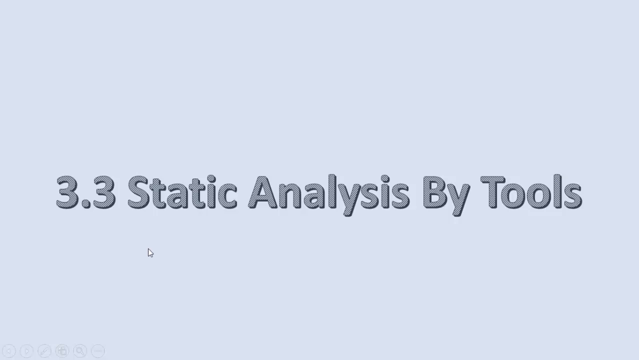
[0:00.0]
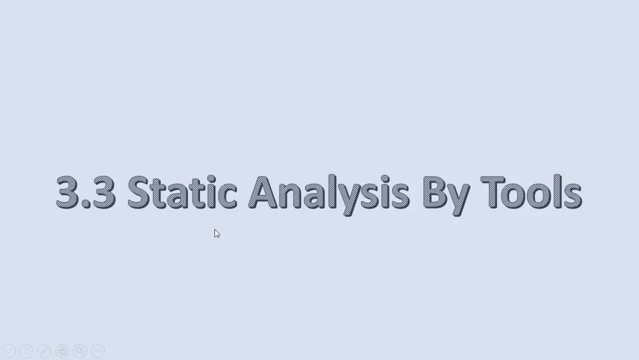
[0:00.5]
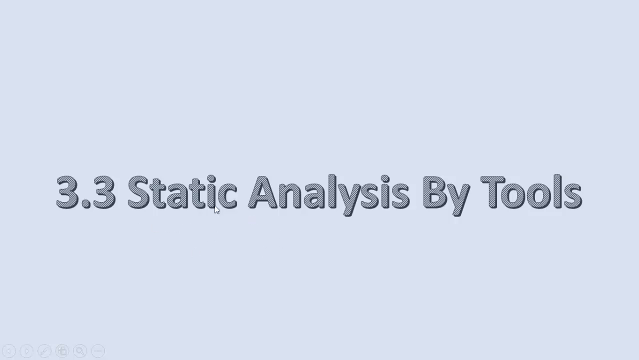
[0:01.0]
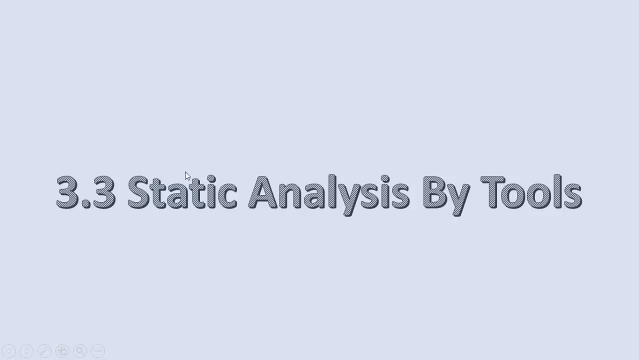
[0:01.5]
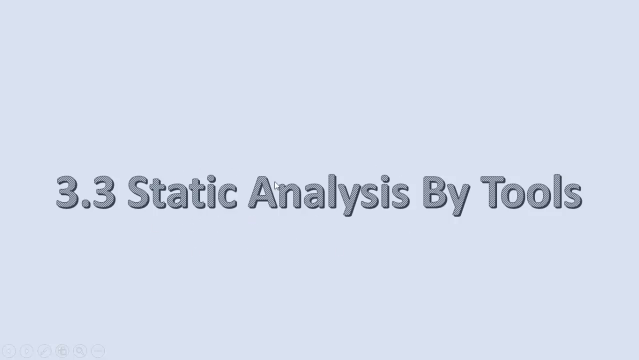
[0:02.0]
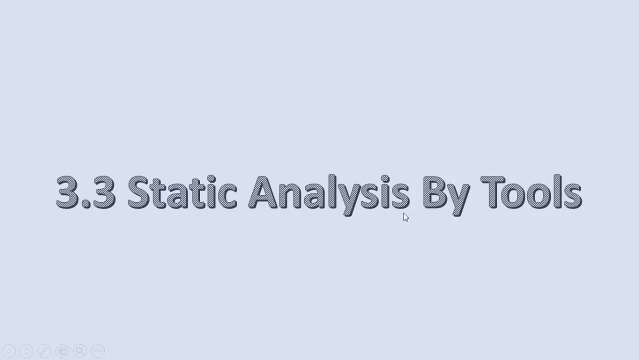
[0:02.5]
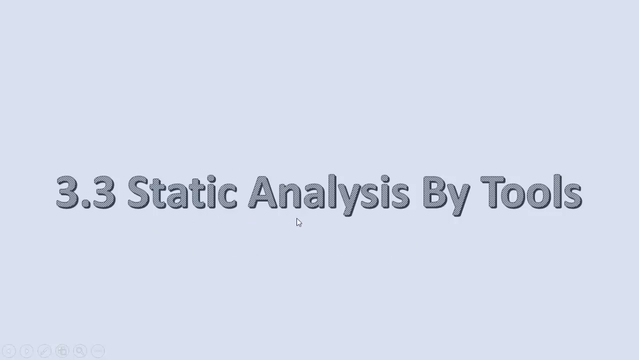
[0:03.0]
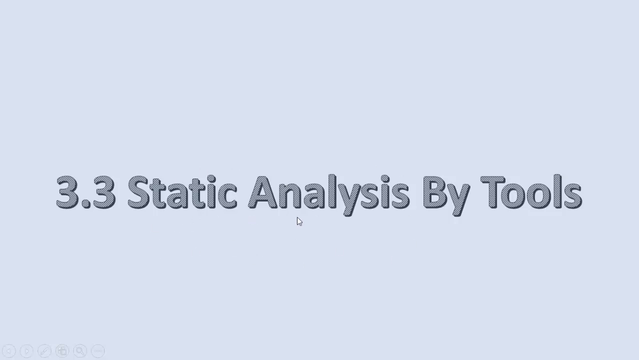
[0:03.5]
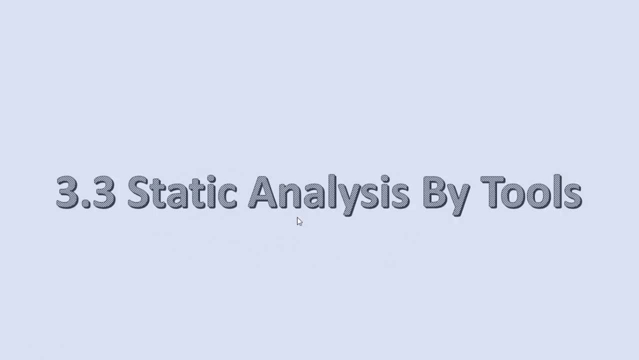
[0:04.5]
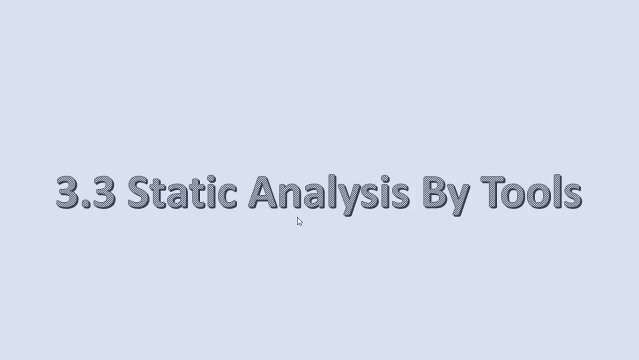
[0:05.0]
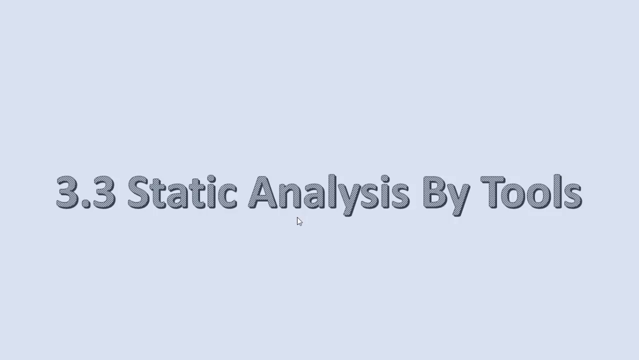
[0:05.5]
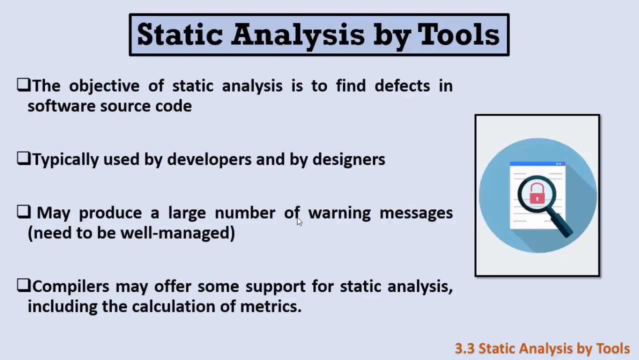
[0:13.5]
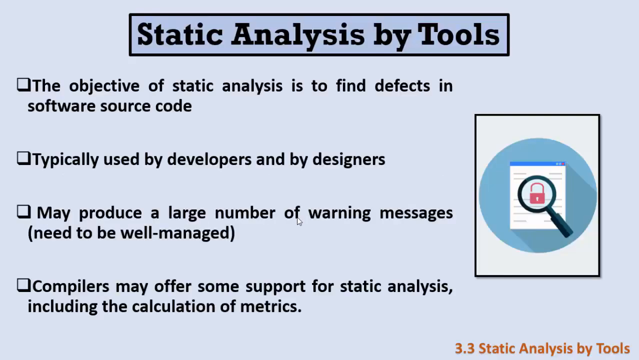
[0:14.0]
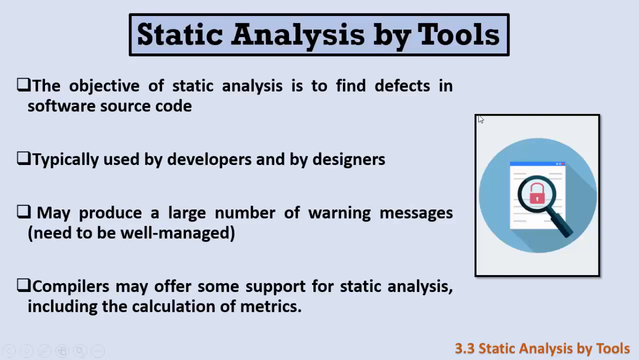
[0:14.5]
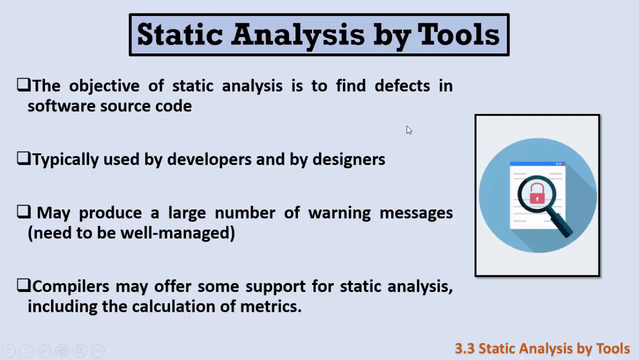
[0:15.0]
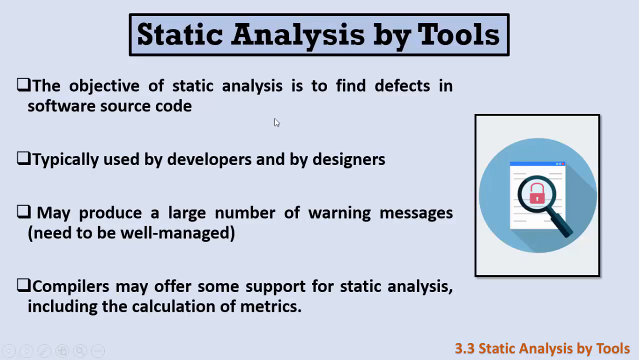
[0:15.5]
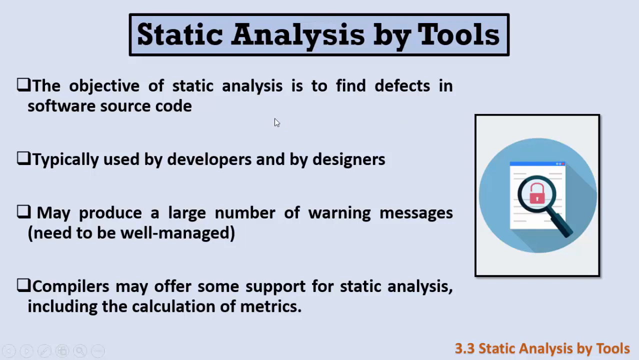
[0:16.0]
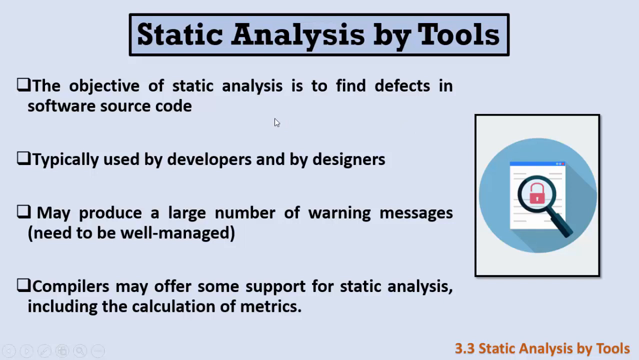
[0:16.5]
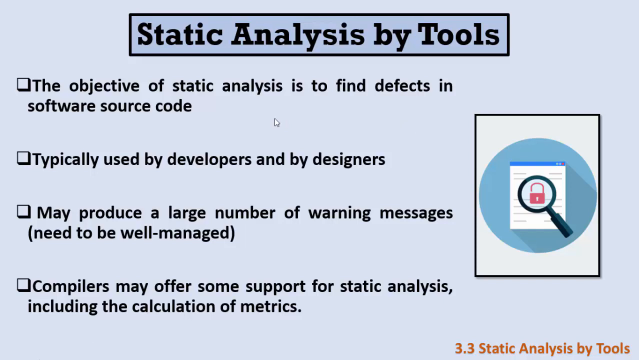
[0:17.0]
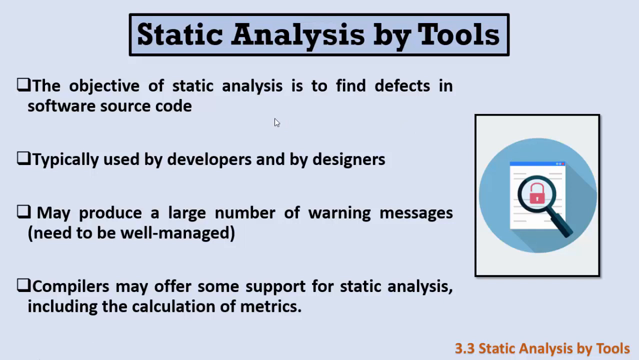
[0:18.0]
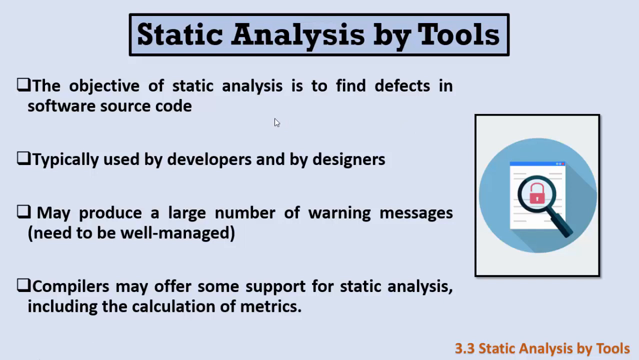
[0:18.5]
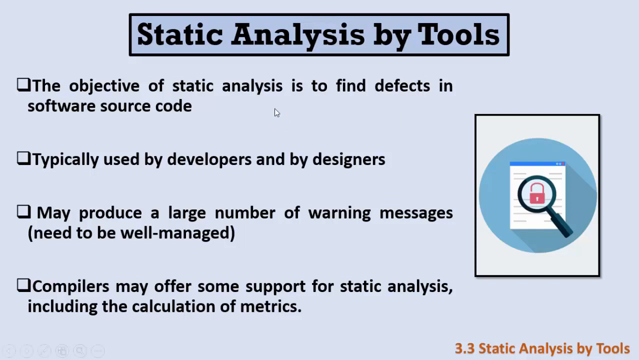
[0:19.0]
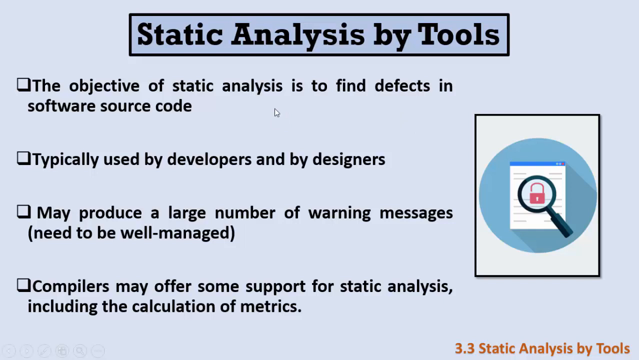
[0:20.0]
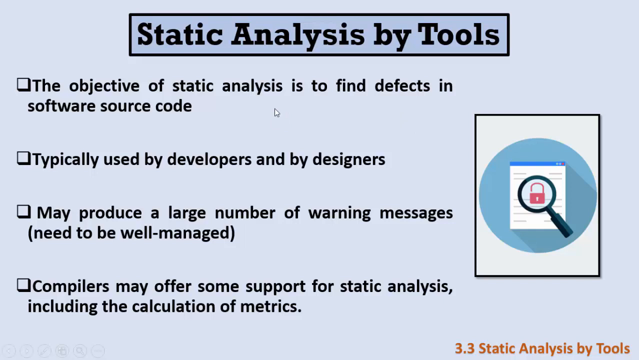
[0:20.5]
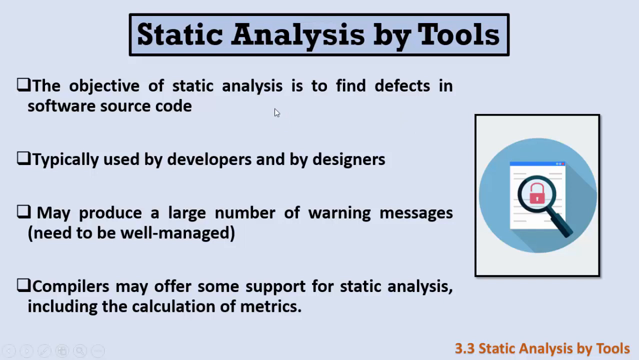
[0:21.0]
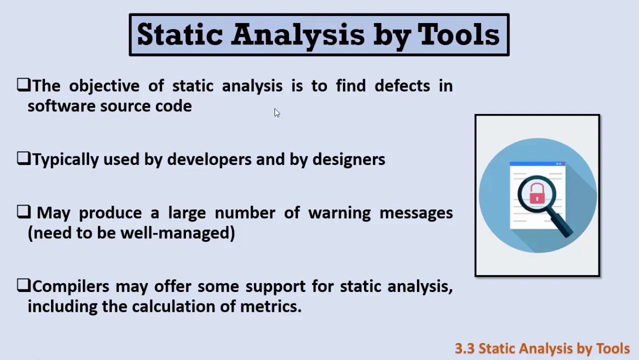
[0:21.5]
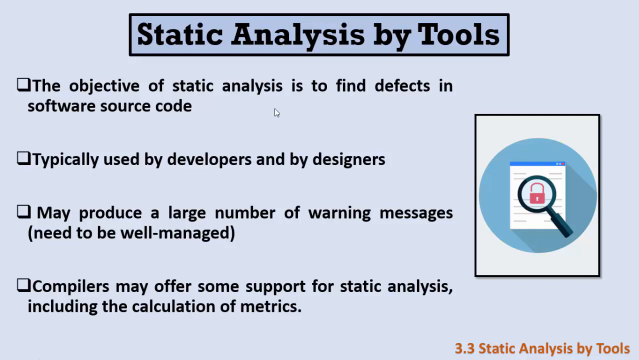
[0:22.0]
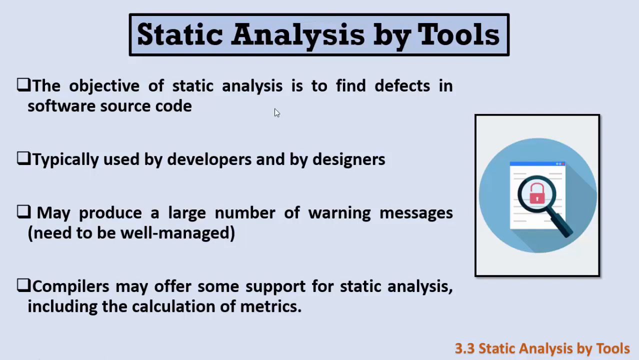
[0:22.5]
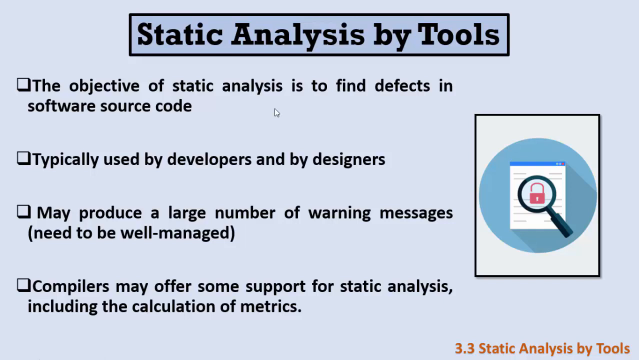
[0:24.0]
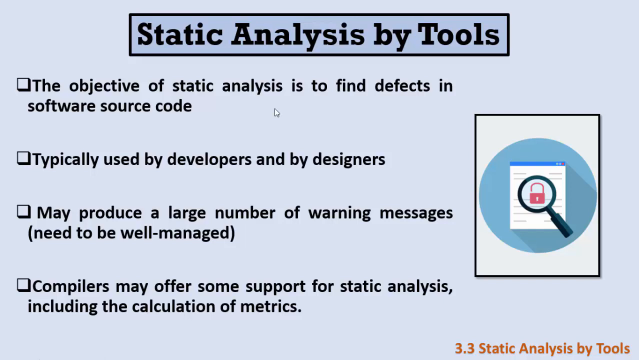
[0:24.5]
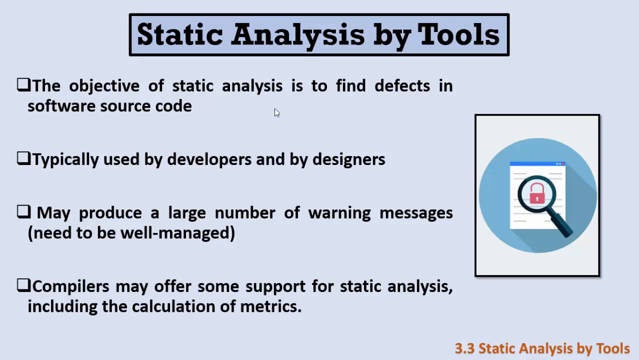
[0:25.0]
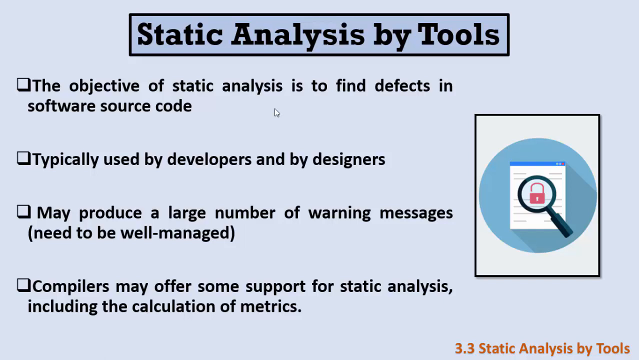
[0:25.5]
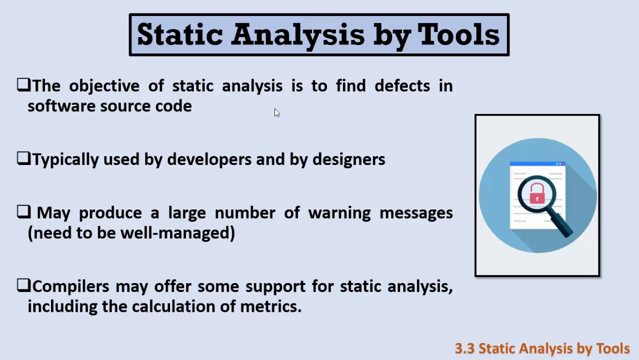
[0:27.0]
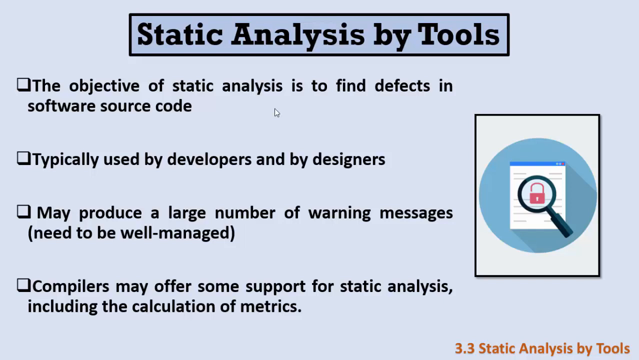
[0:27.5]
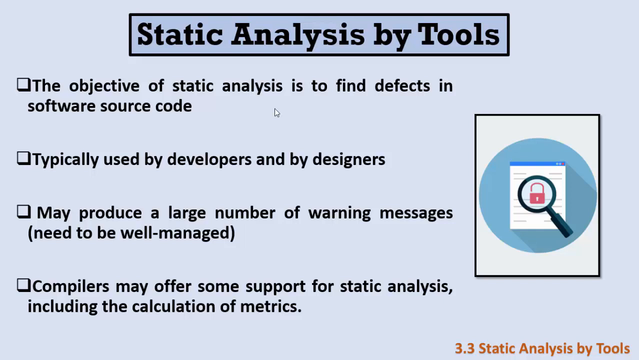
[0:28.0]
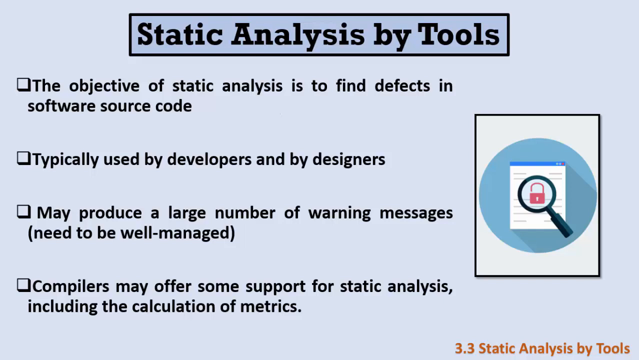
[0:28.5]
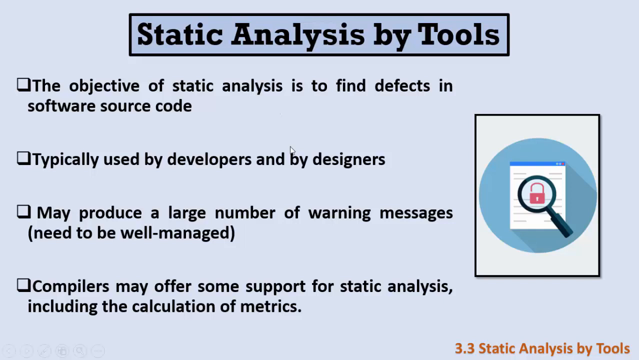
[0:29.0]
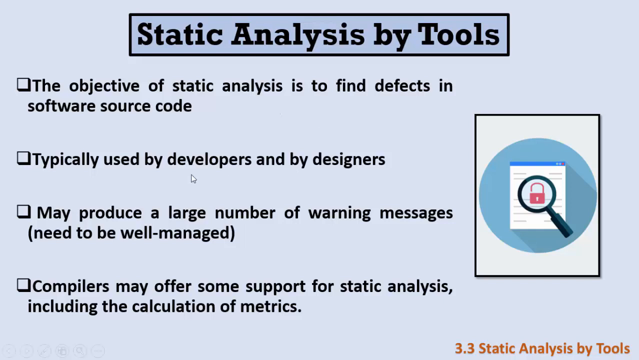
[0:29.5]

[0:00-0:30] The video opens on a title, "3.3 Static Analysis by Tools", in darker grey text on a light greyish blue background, while the cursor arrow rapidly circles the text. The cursor then stops moving and the title stays on screen for several seconds. The next screen shows black text reading "Static Analysis by Tools", with a list of points underneath: "the objective of static analysis is to find defects in software source code", "typically used by developers and by designers", "may produce a large number of warning messages, need to be well managed", and "compilers may offer some support for static analysis including the calculation of metrics". On the right-hand side of the screen is an icon of a magnifying glass looking at a pink padlock over a screen or document.